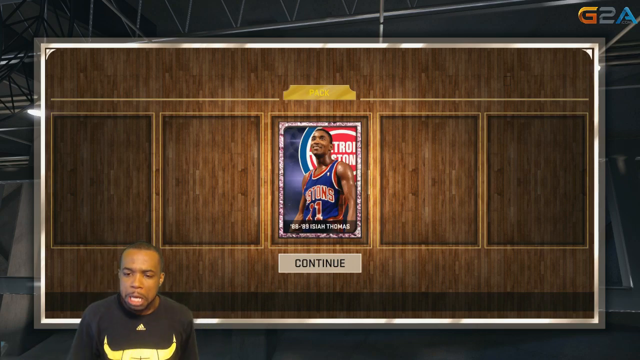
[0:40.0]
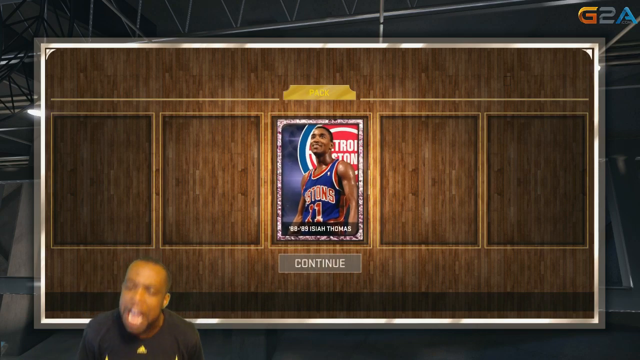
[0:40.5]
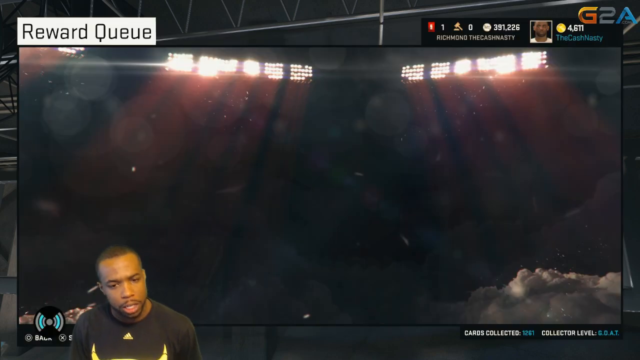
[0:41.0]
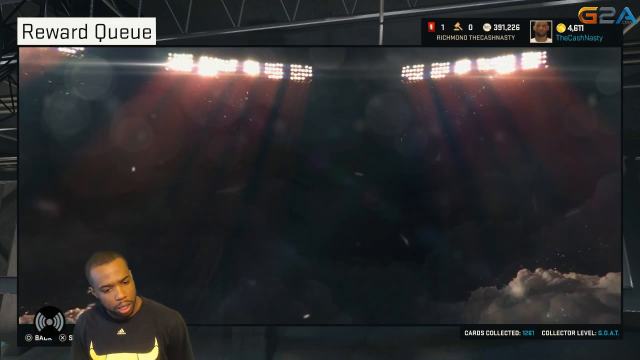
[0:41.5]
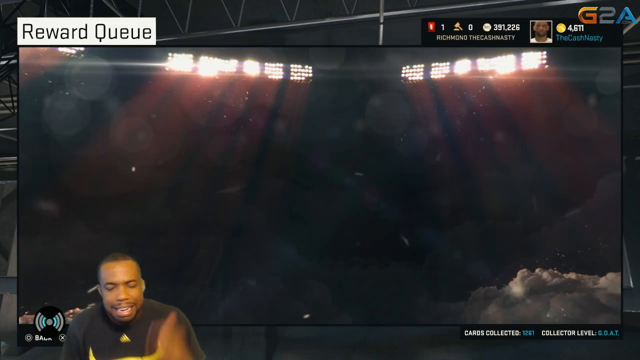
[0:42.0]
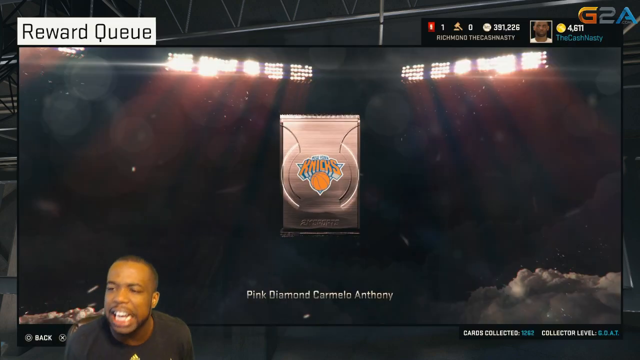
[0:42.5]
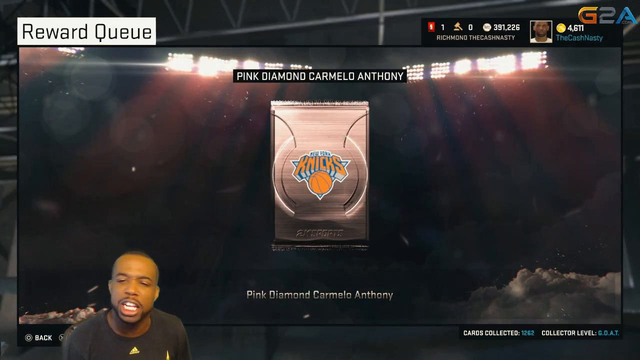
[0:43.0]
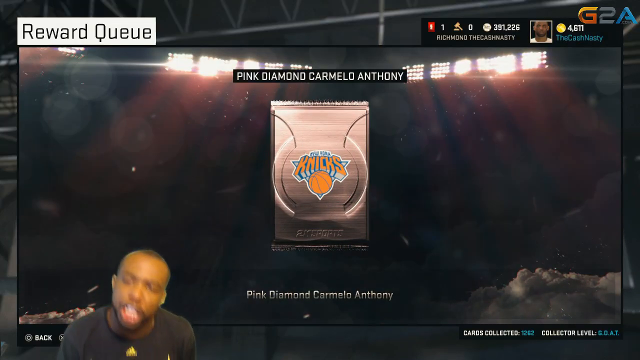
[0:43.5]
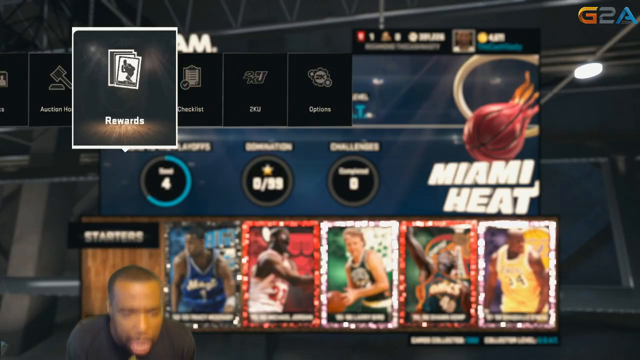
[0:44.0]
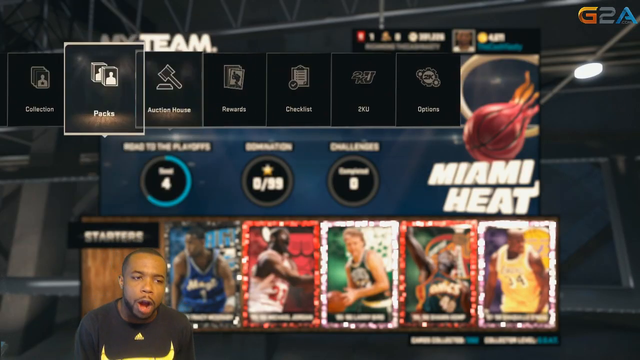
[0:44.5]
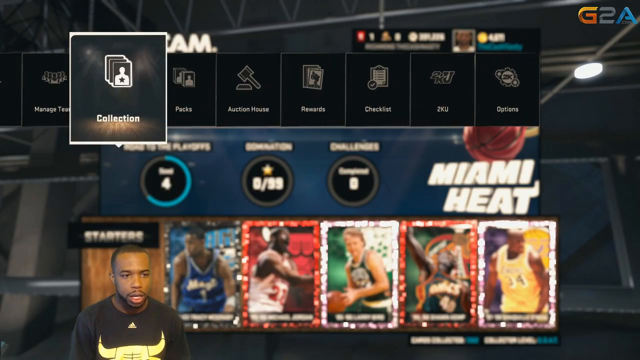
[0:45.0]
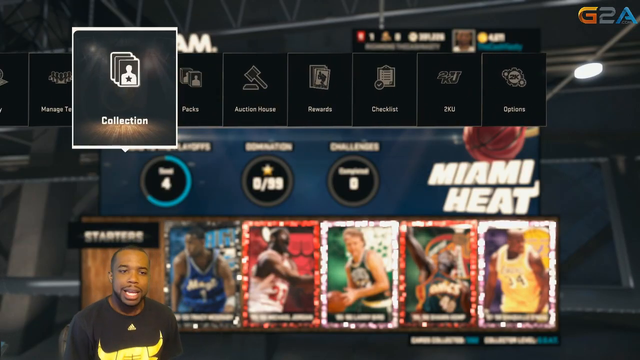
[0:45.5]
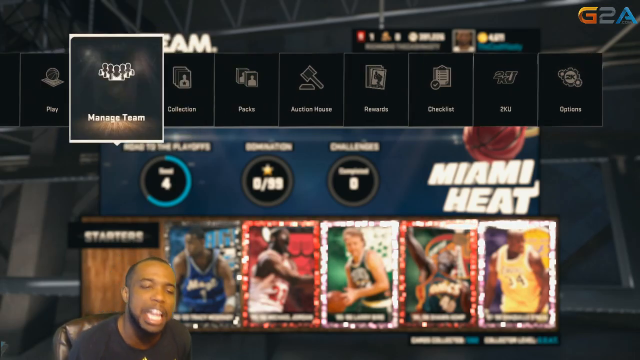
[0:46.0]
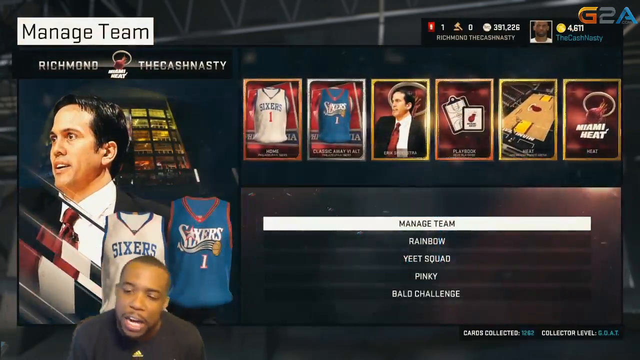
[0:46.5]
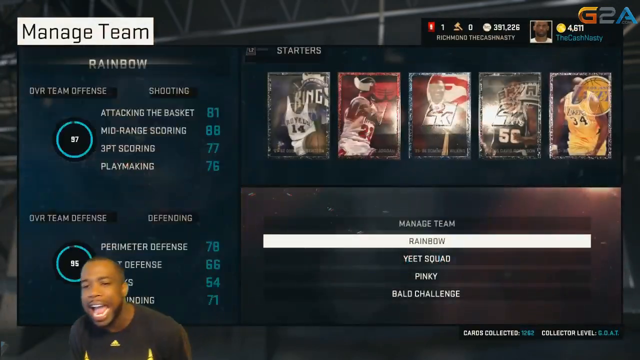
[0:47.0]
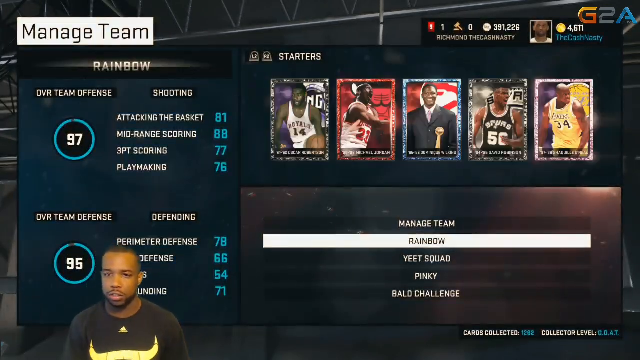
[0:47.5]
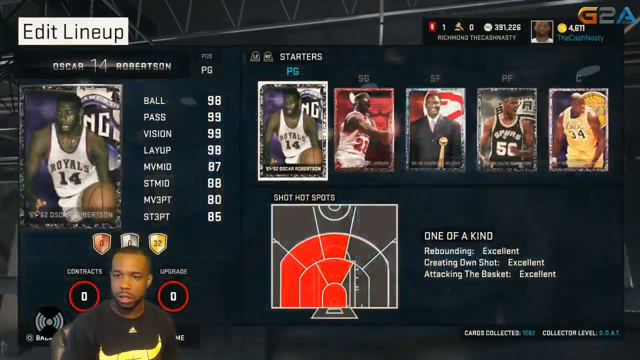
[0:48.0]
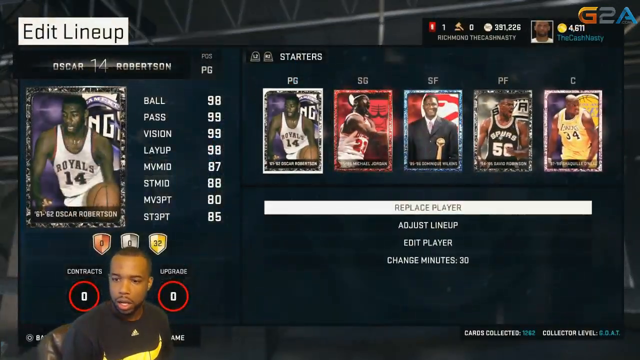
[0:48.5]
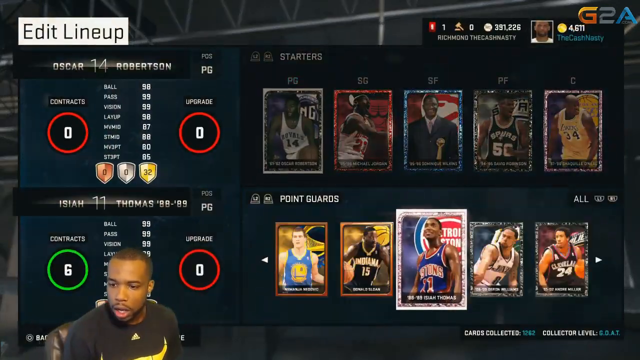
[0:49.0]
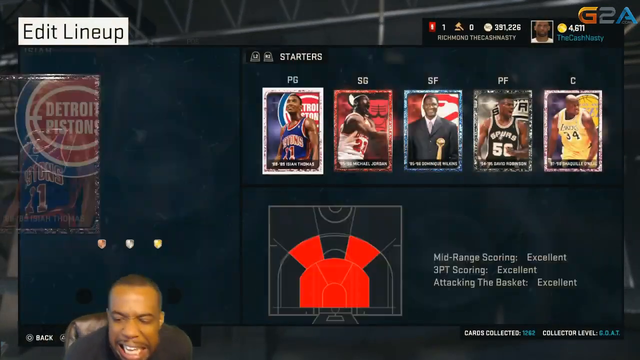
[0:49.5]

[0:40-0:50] Isaiah Thomas is in the center of the screen and the man is in the lower left. A New York Knicks logo appears briefly, and then the menu in the top third of the screen quickly changes from panel to panel. Text appears almost too fast to read, showing images of different players and their statistics, including ball, pass, vision, layups, and other abbreviations such as three-point throws made and attempted. Approximately 10 different NBA players appear in their trading cards on the screen.